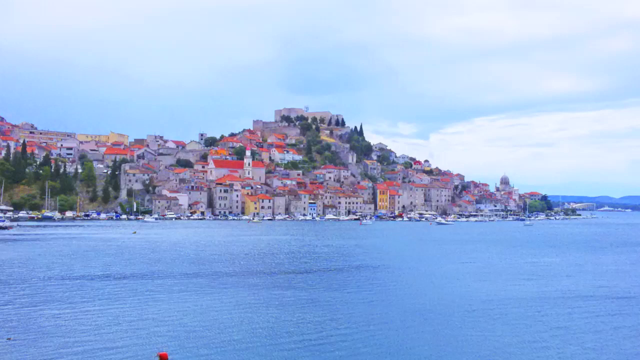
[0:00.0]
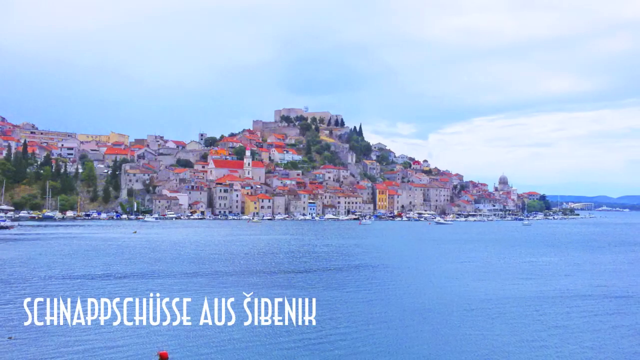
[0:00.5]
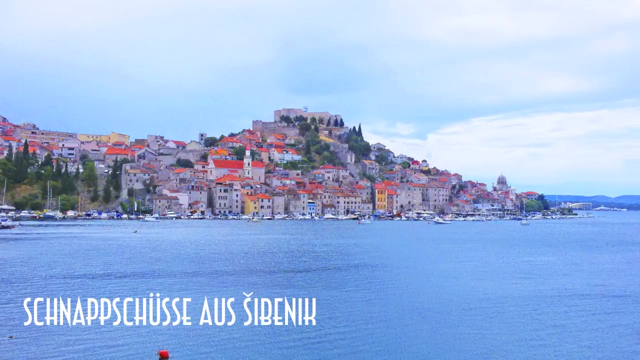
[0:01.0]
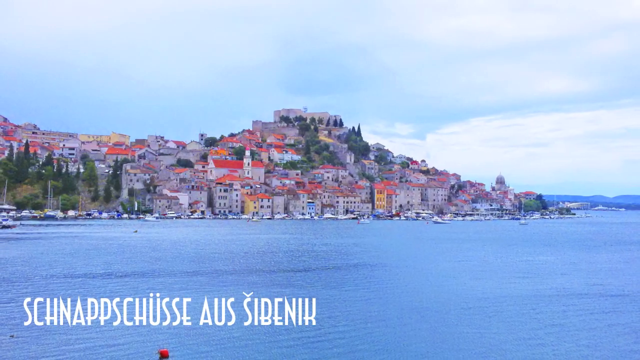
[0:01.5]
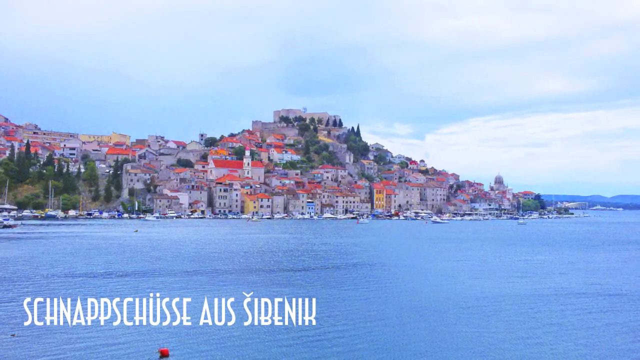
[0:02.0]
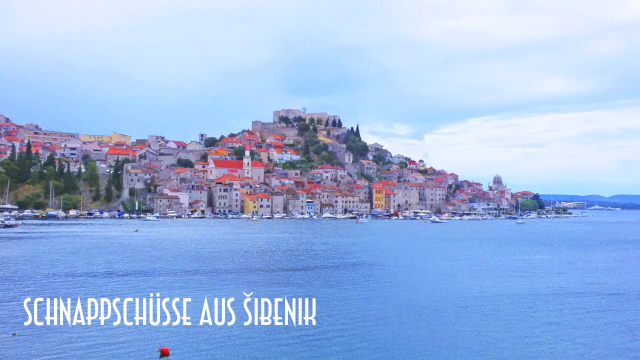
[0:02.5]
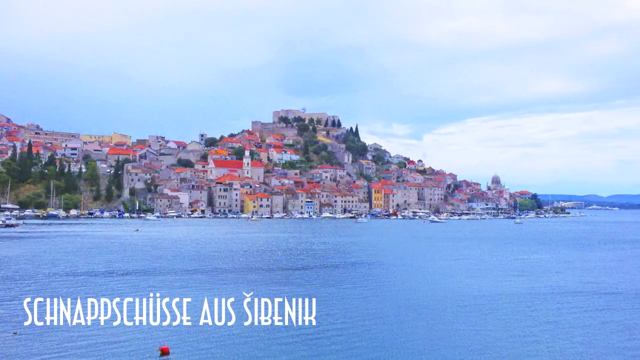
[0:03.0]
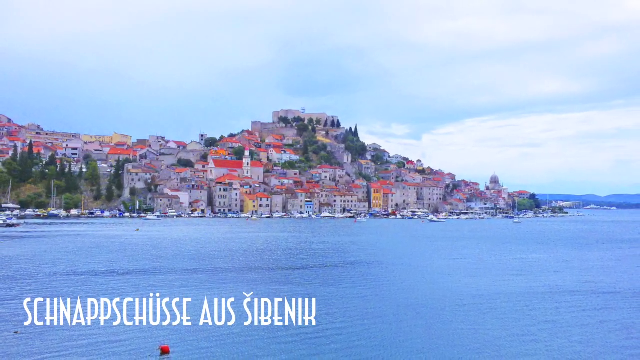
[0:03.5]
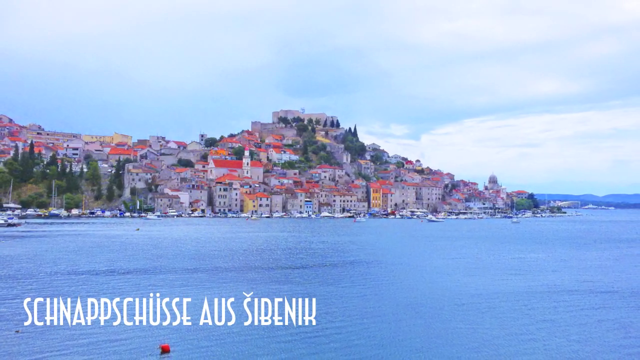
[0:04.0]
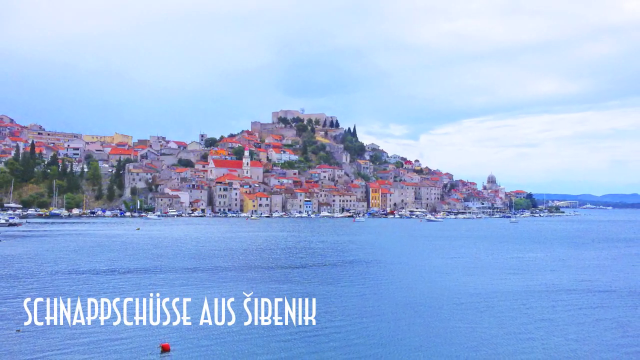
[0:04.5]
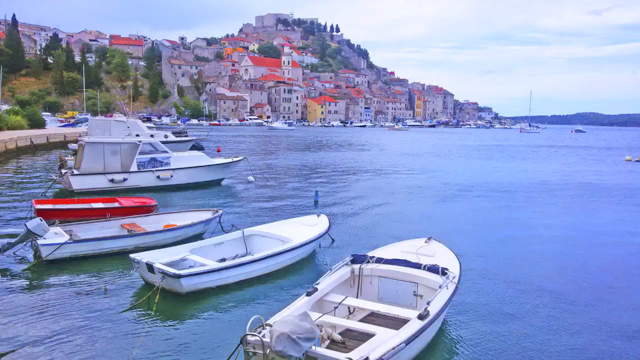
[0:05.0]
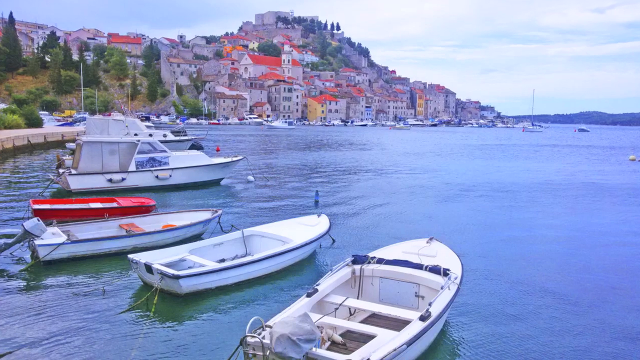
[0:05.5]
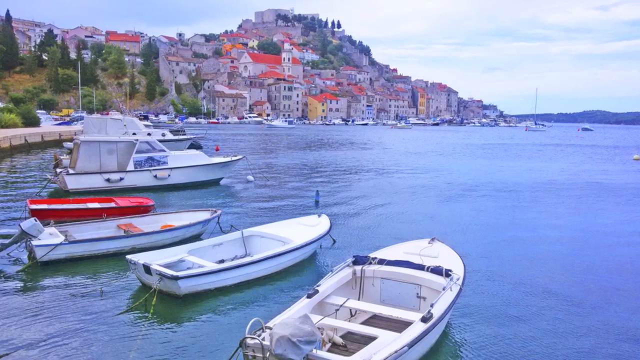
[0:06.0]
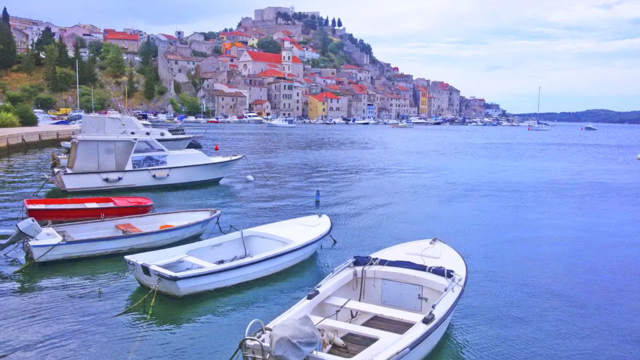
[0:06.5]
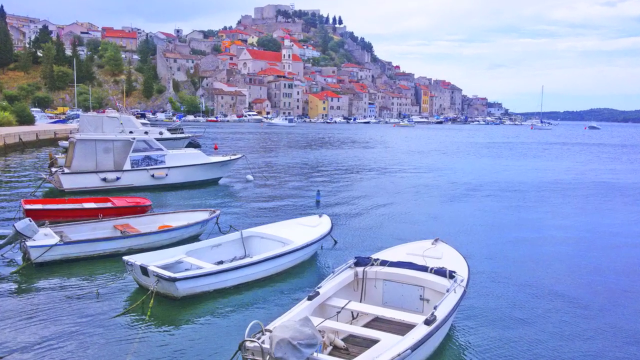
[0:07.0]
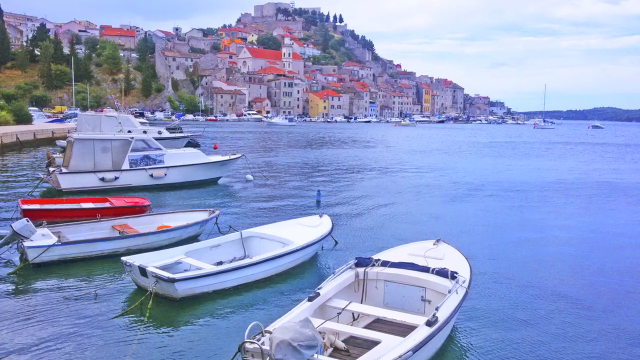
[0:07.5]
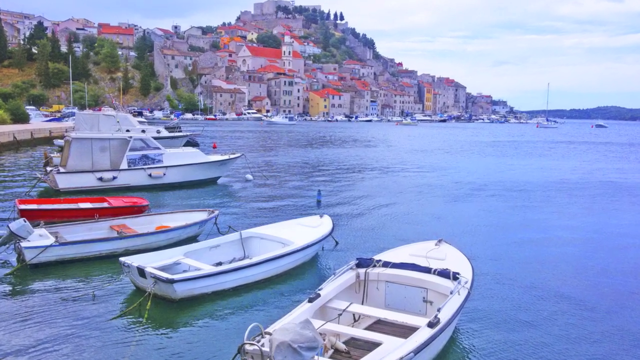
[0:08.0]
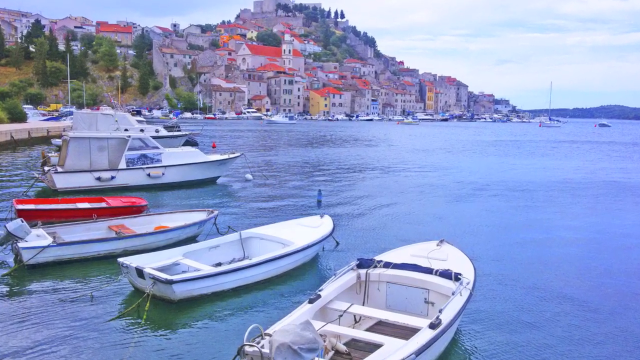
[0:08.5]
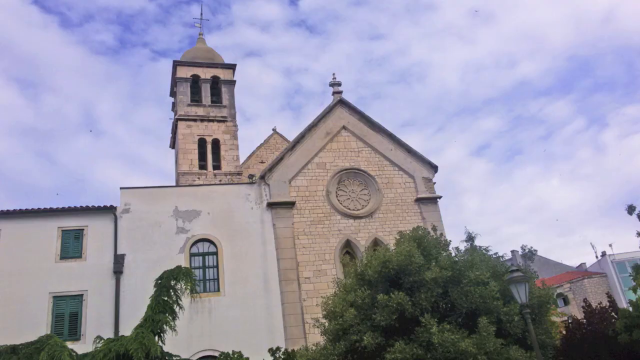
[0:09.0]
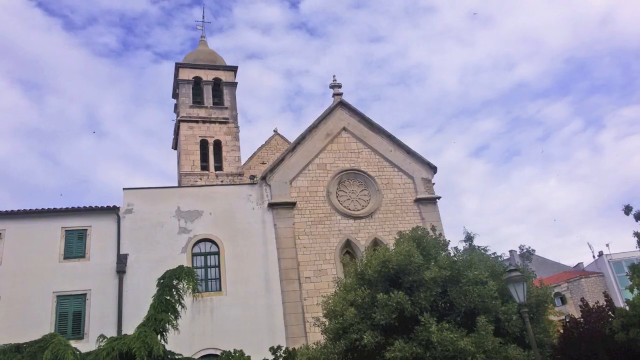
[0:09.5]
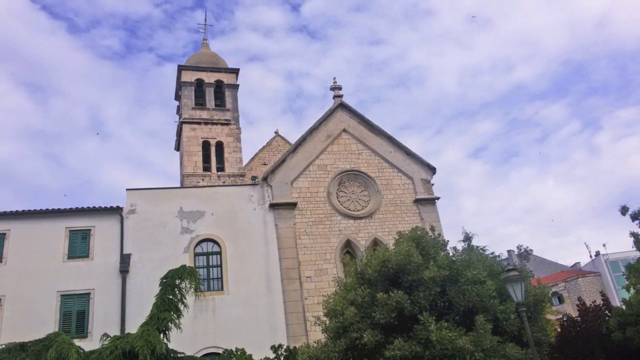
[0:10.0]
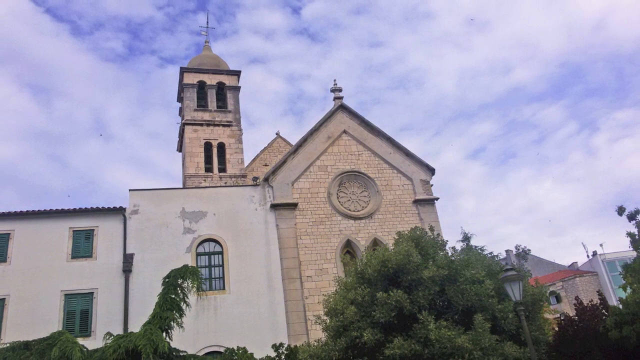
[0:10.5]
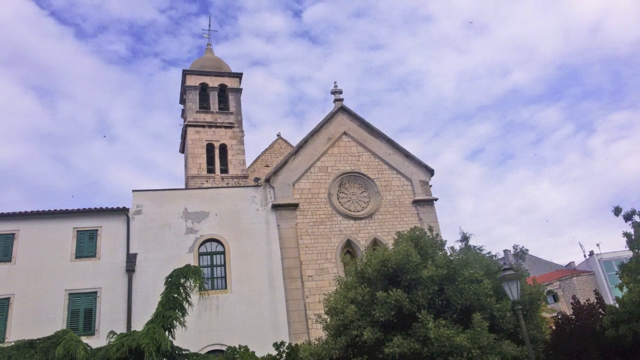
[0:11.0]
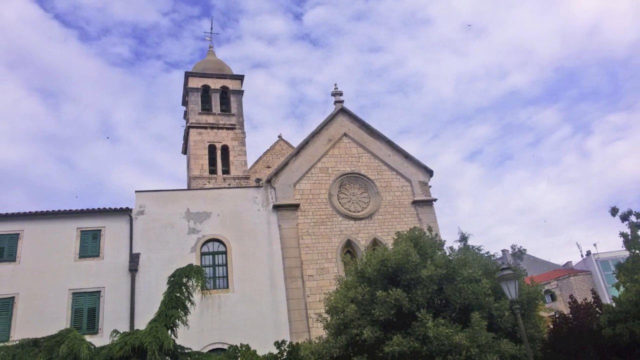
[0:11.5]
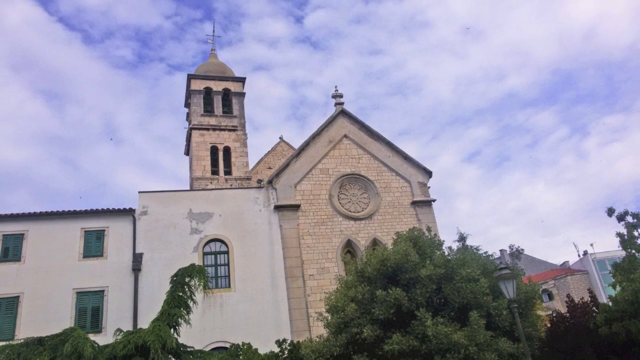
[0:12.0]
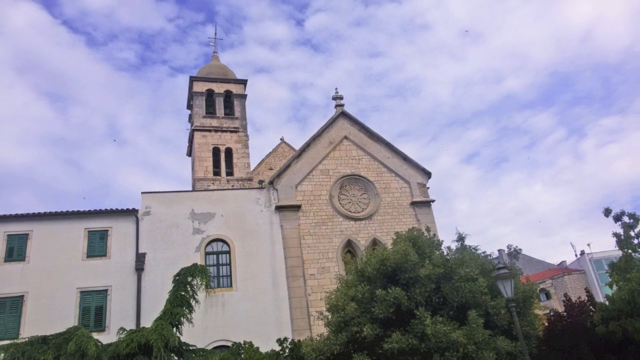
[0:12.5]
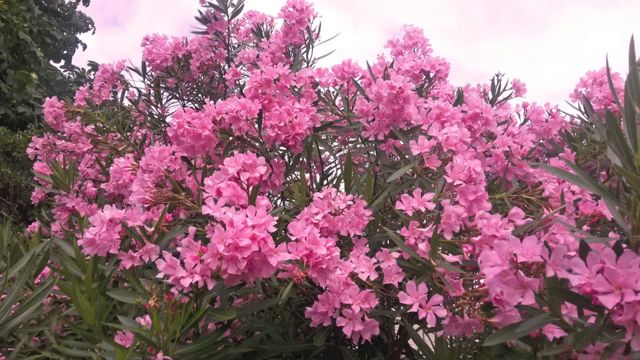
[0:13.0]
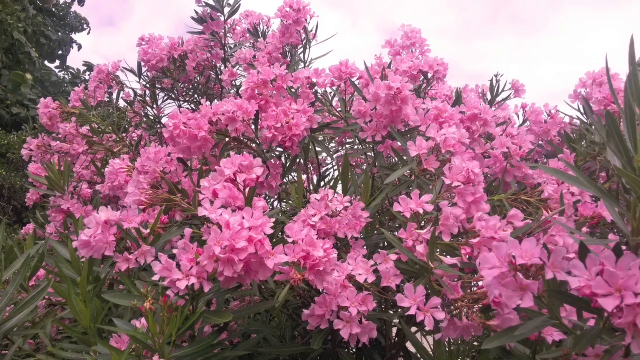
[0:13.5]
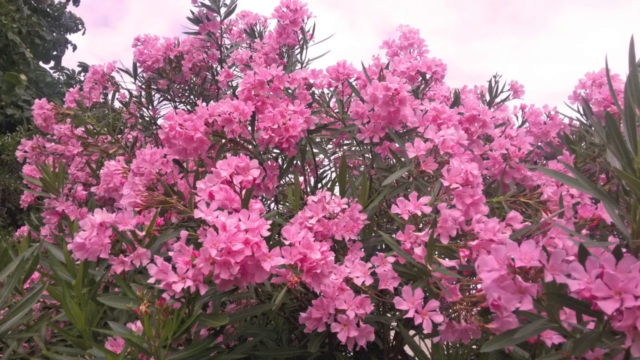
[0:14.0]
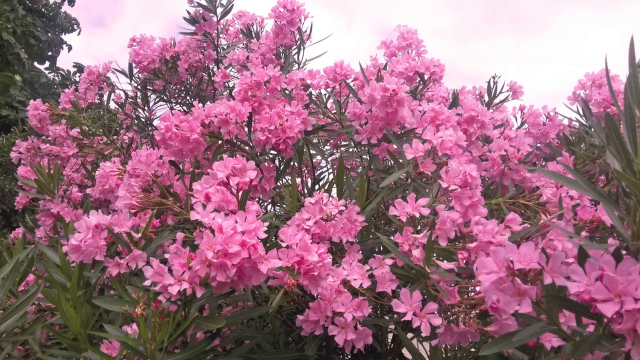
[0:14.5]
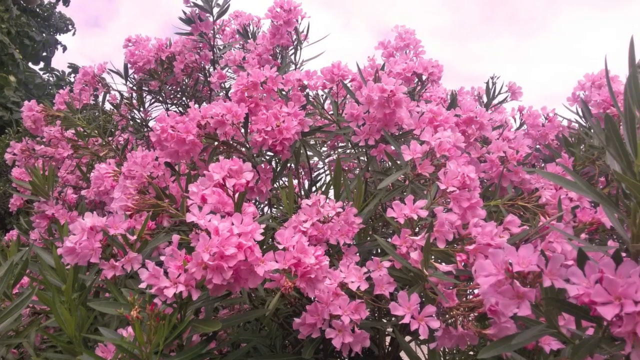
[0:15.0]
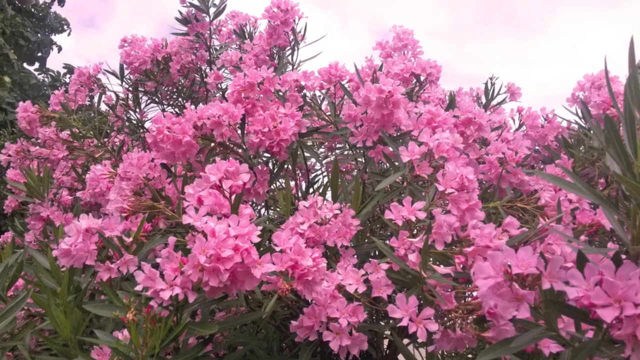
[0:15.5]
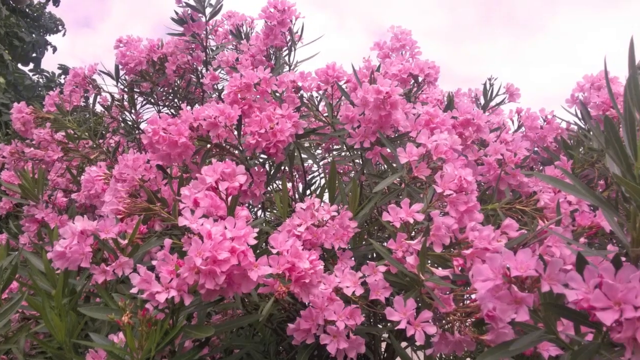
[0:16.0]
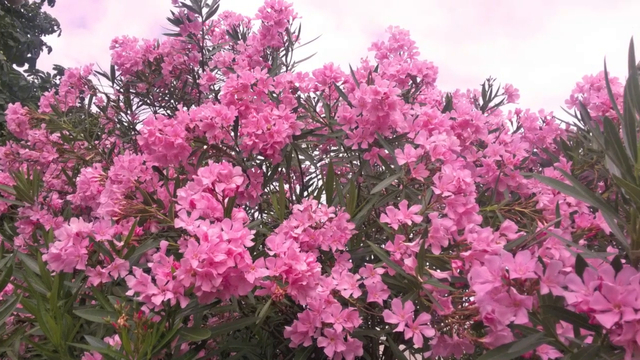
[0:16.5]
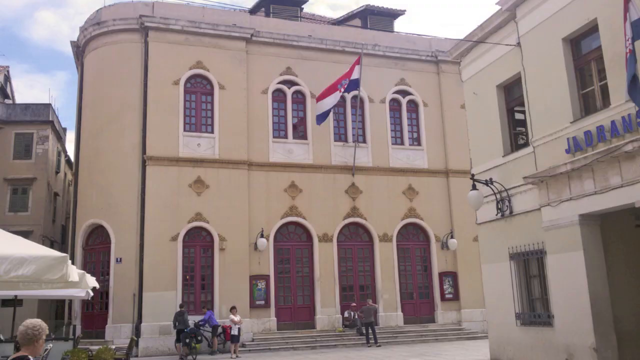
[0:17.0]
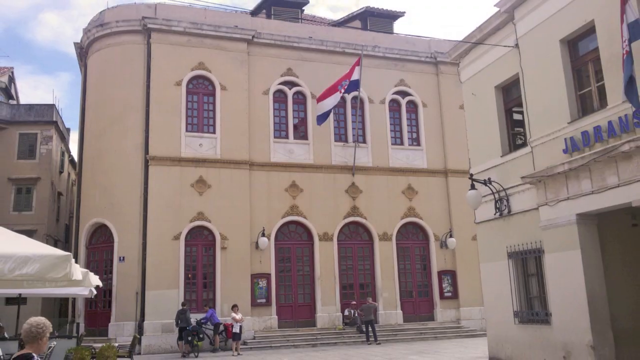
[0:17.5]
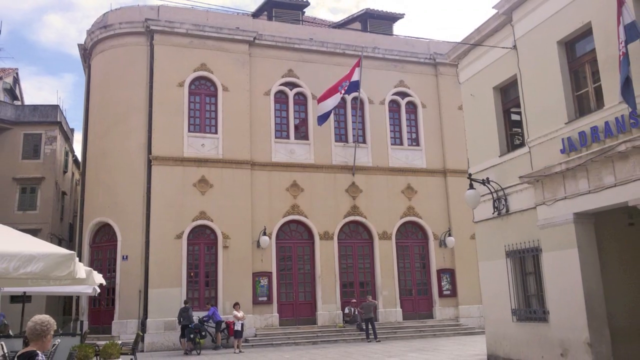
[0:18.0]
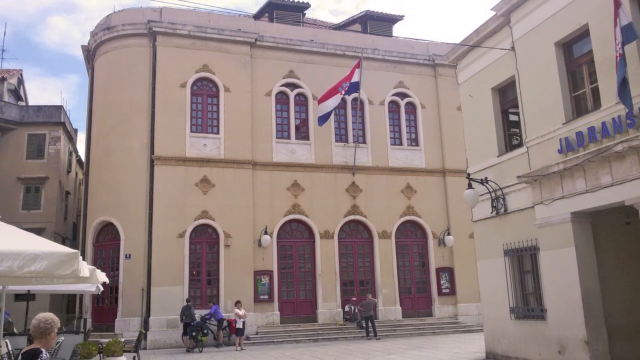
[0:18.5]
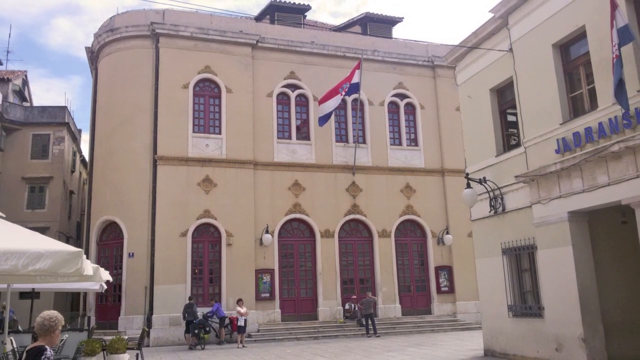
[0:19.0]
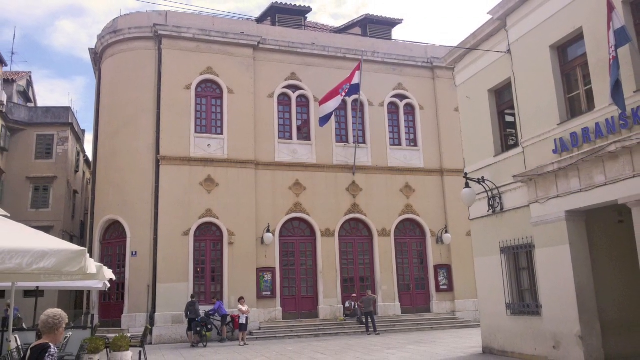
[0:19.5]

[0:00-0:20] The video opens on a view of a seaside town: the ocean or sea is visible, and in the background a hill with houses and buildings appears, clearly a seaside village or town. The view transitions to another angle, still looking at the sea, where about five or six boats are docked with the town or village in the background. The camera zooms in a bit, and then the video transitions to what looks like it could be a church of some sort, a brick, church-like building with something almost like a steeple and what might be a cross on top. Next comes a photograph of some flowers, followed by a photograph of another building, a tan one. Some text in another language, which cannot be made out, appears on the lower left-hand side.